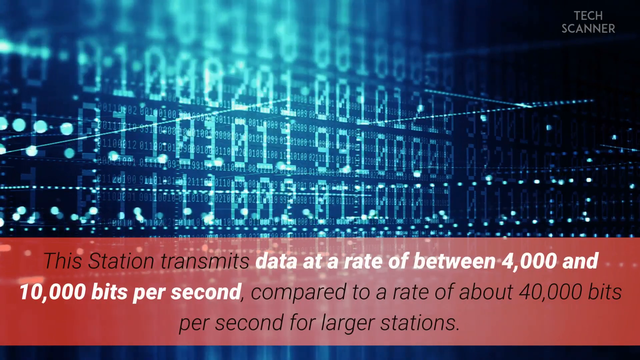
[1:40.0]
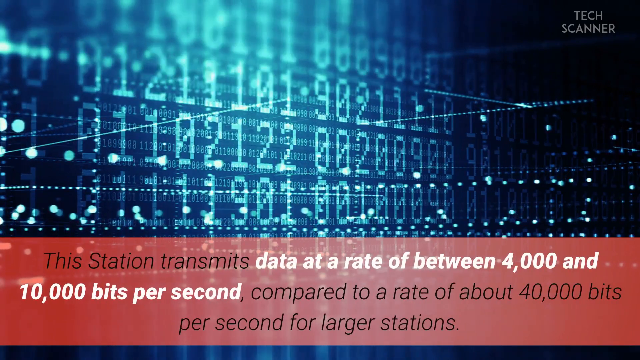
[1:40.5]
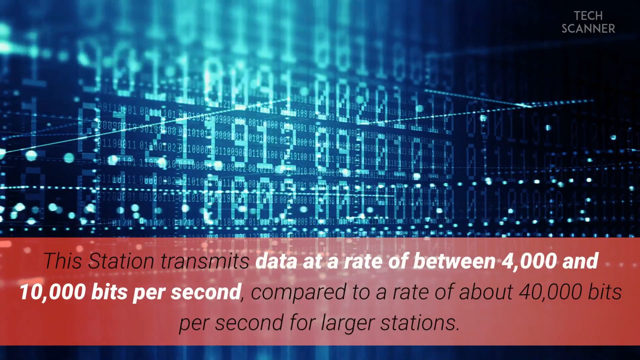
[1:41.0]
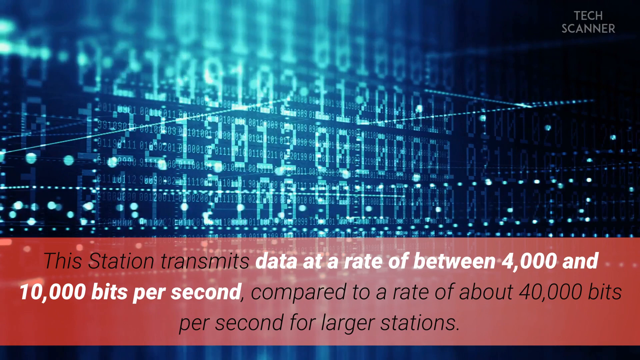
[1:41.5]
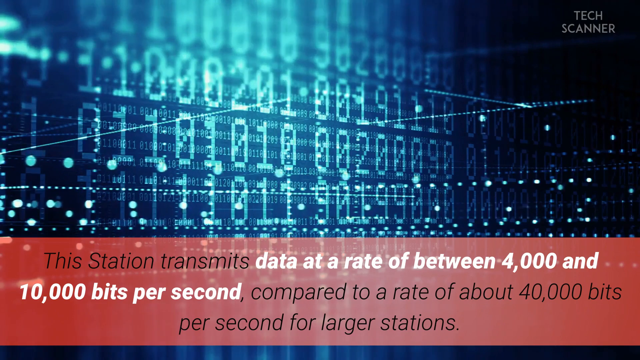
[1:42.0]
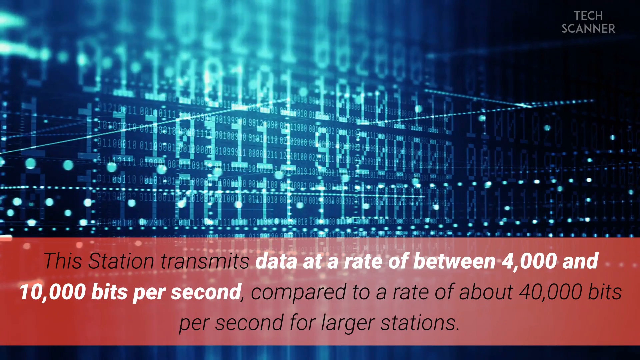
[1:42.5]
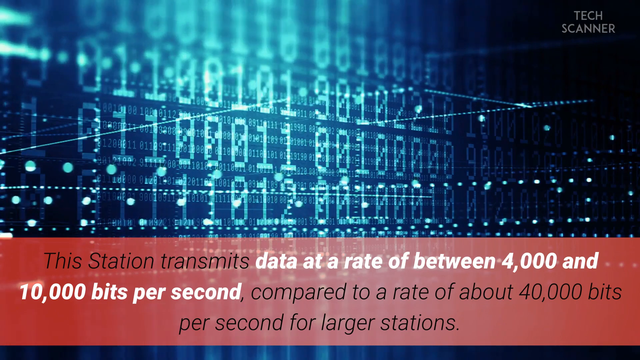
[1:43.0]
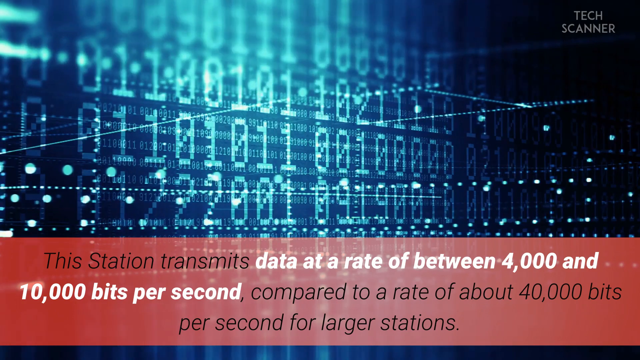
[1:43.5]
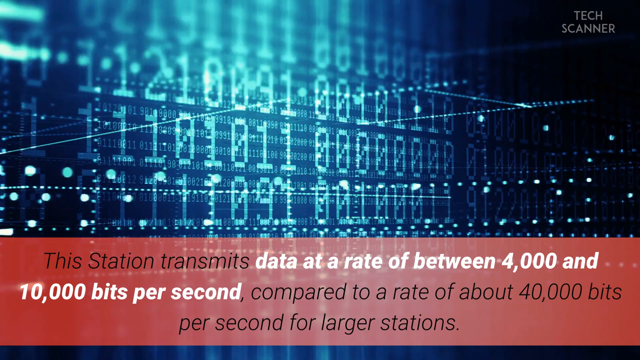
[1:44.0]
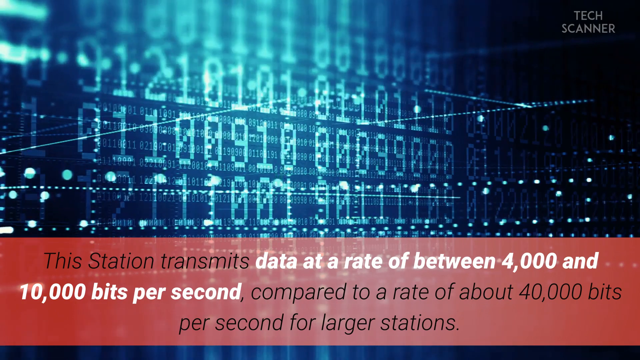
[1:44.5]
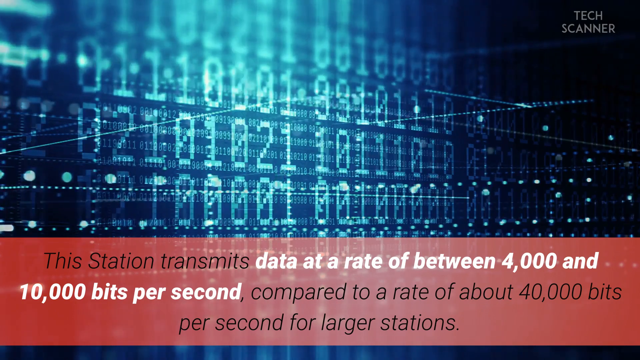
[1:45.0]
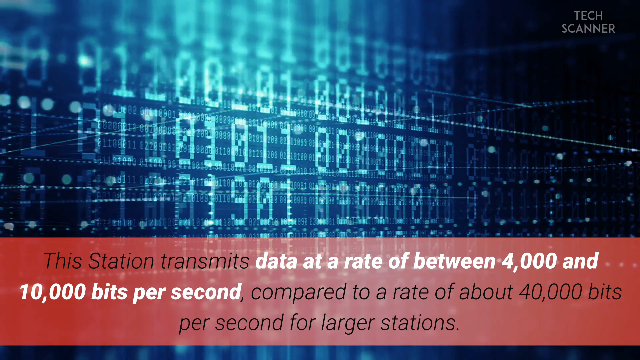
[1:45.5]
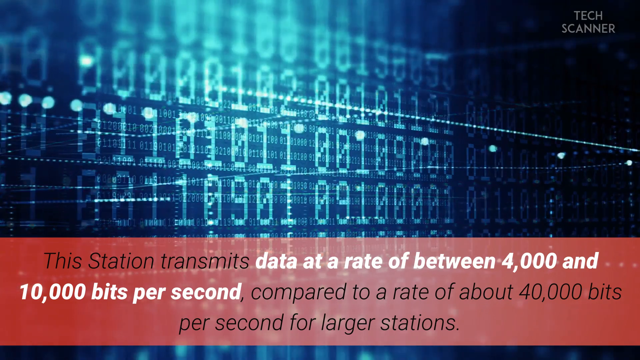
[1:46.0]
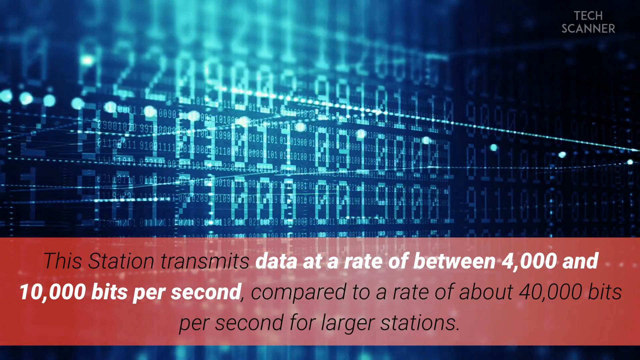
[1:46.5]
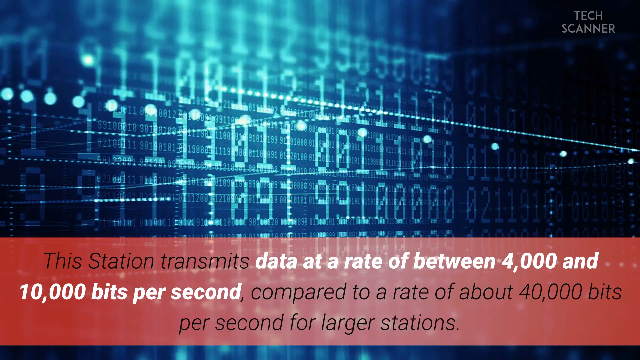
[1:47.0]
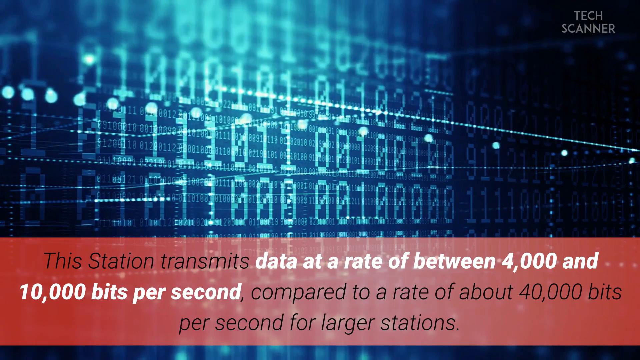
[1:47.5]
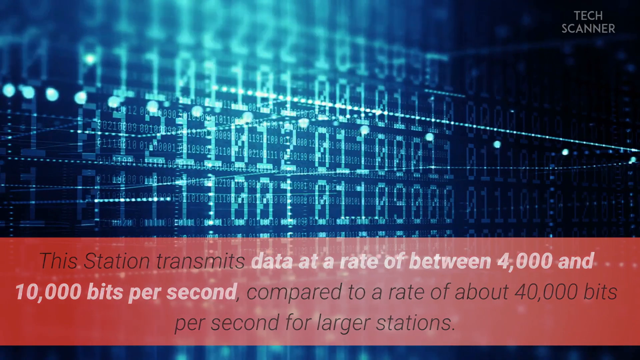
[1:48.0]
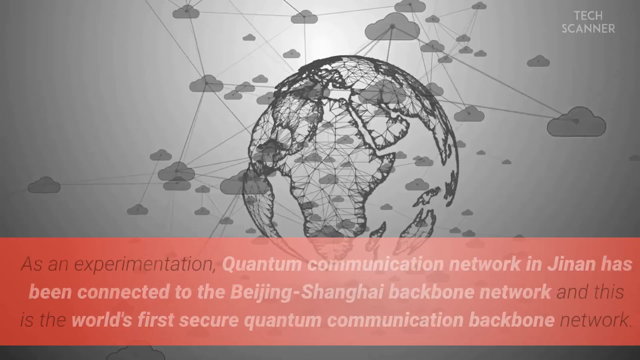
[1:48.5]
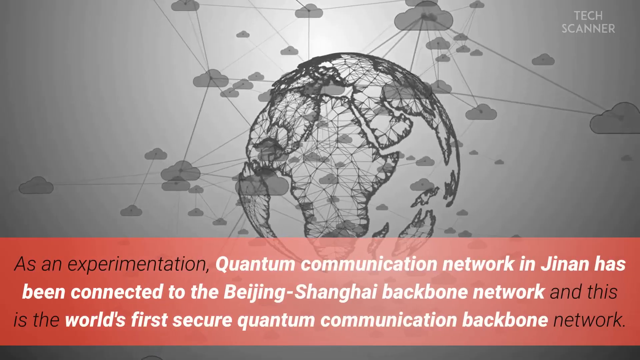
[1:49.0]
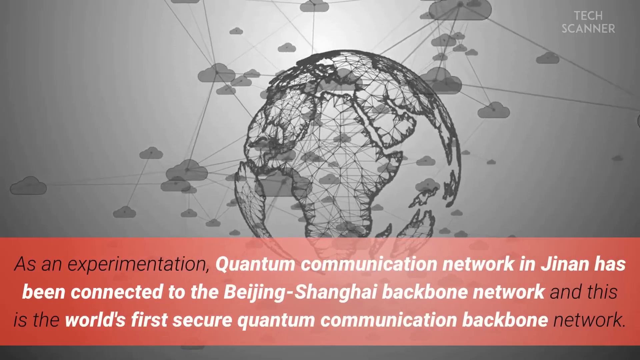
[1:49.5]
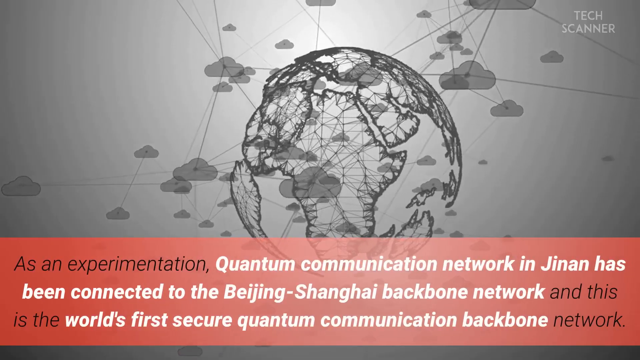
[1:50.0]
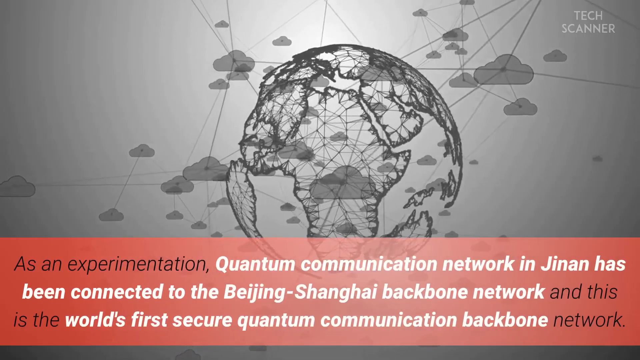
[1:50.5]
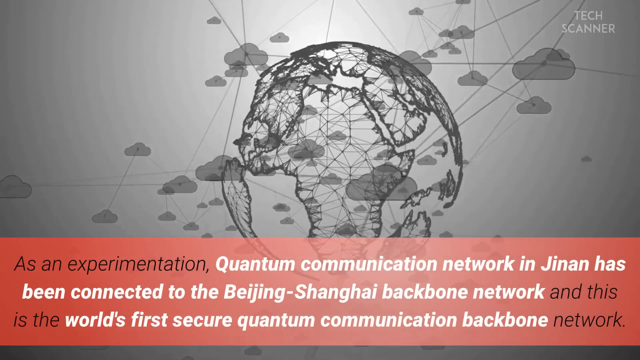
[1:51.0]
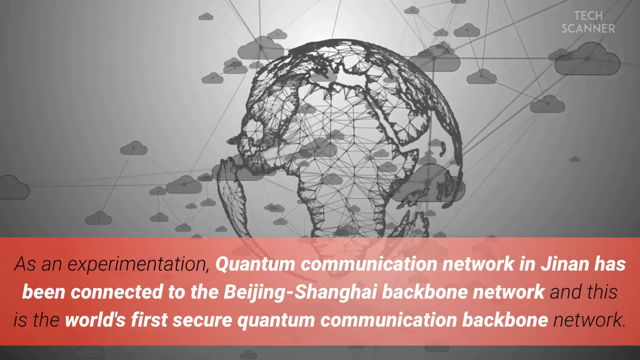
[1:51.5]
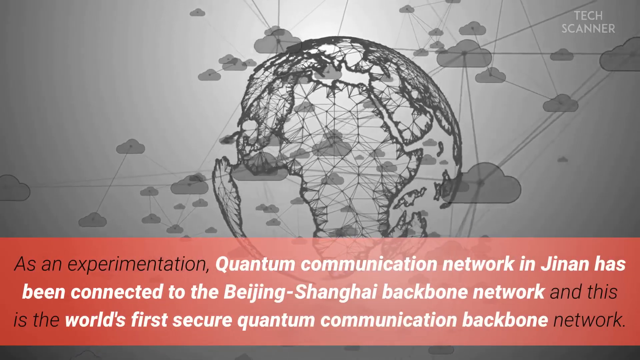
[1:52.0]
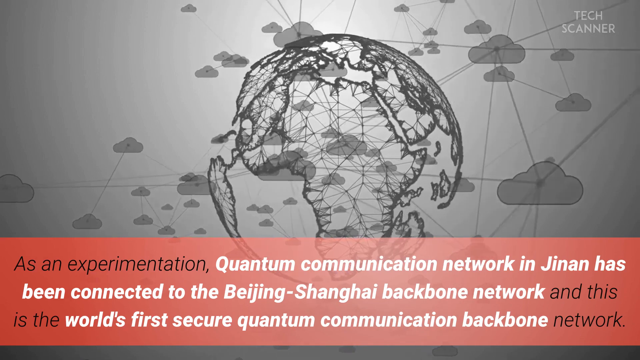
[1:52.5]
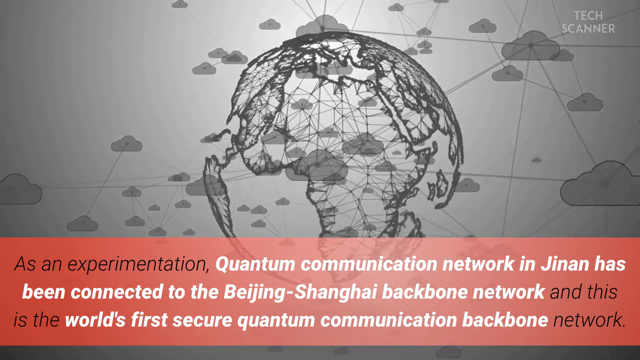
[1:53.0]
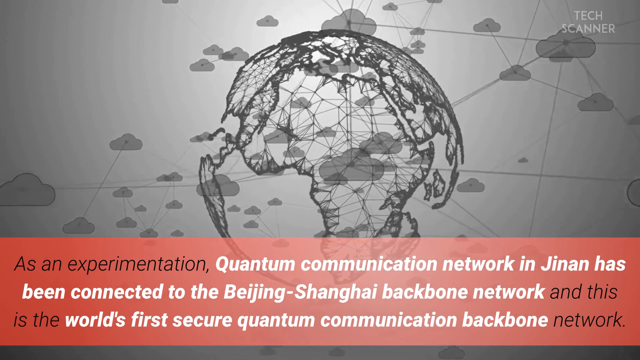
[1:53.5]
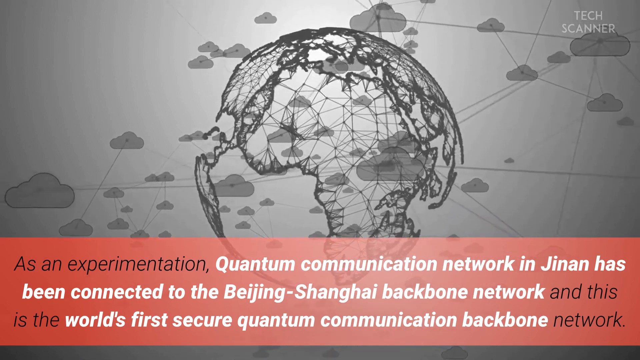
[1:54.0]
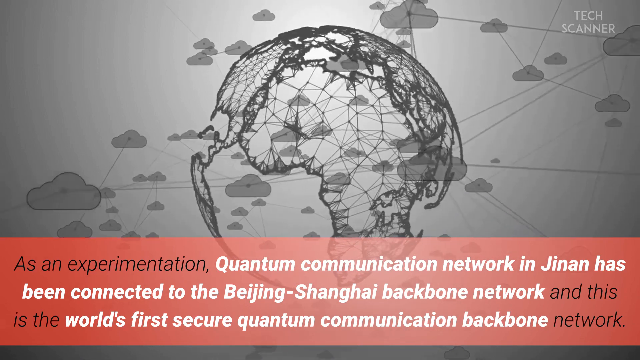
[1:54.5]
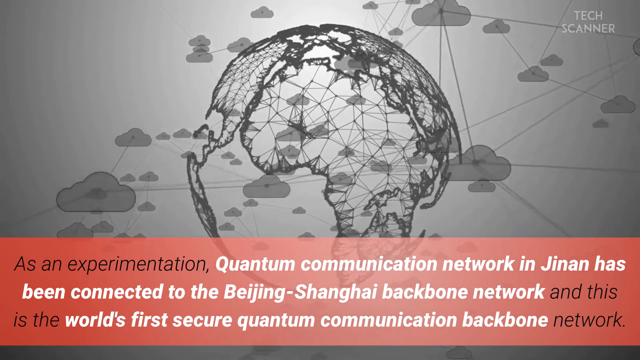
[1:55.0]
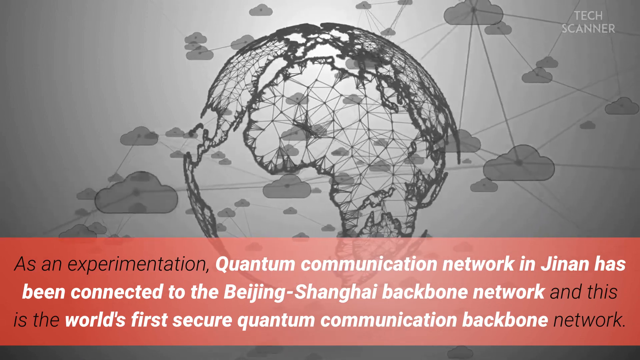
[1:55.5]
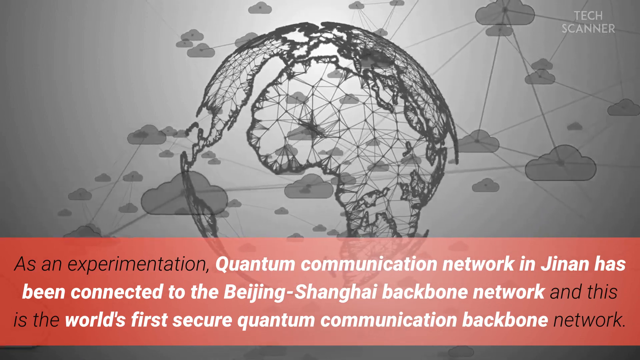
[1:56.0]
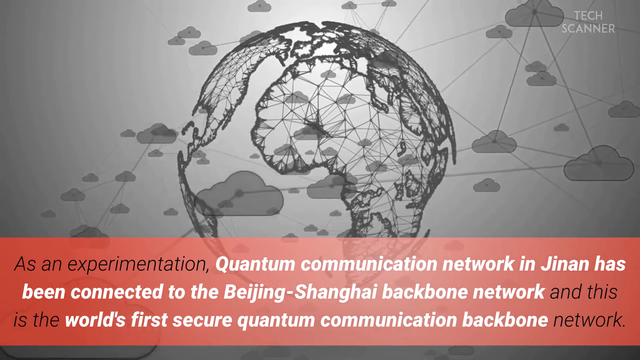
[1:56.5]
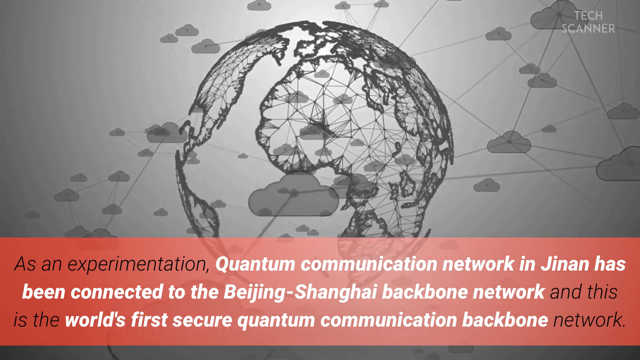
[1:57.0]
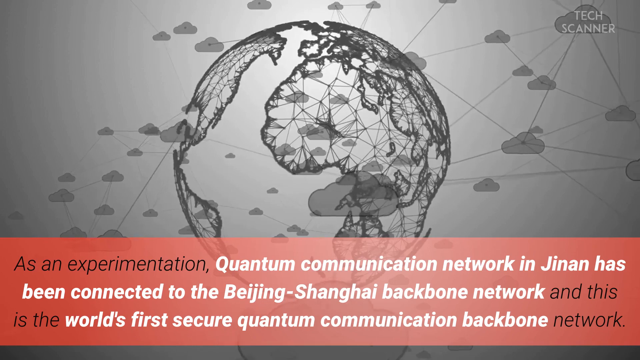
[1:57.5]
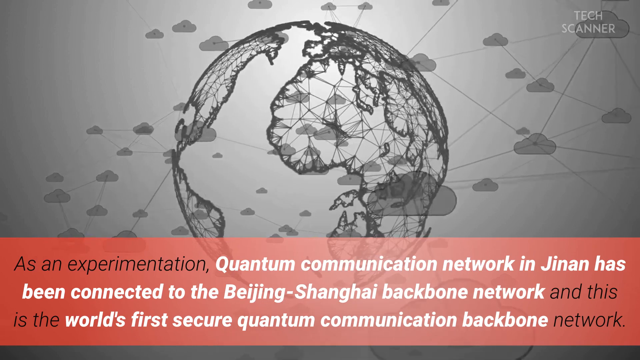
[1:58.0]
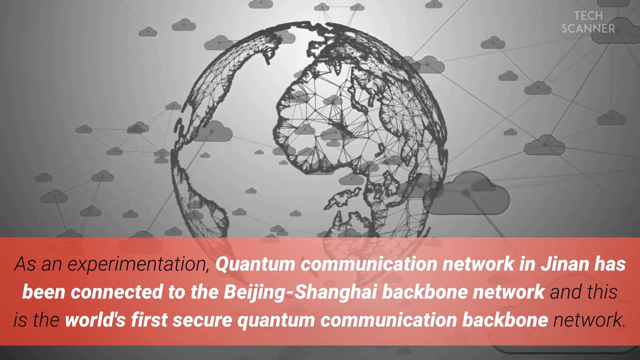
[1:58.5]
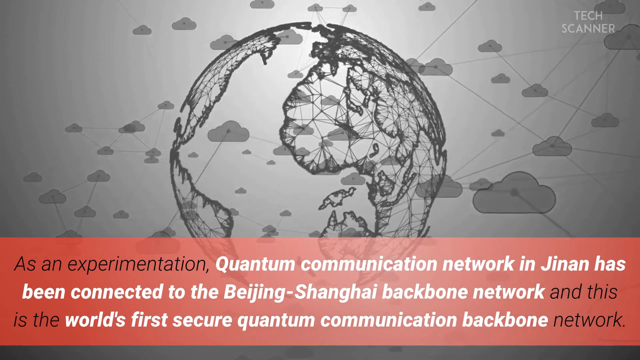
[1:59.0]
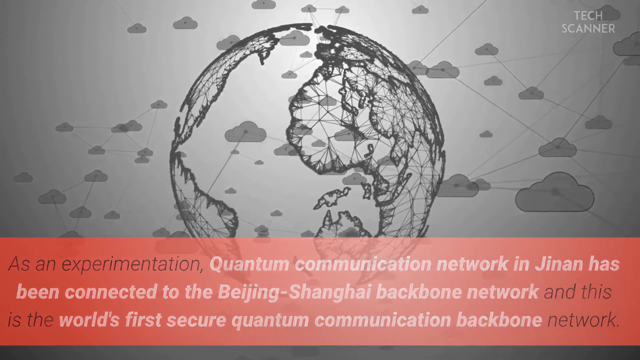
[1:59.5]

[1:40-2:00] The background keeps flashing different numbers, and the red bar at the bottom reads "this station transmits data at a rate of between 4,000 and 10,000 bits per second, compared to a rate of about 40,000 bits per second for larger stations," with "data at a rate between 4,000" written in white. The picture changes to a map done in black and white that looks like a hand sketch. The red box then carries text ending "has been connected to the Beijing Shanghai Backbone Network" and "this is the world's first secure quantum communicative backbone network." The illustrated globe keeps slowly turning. A flash of lights and colors follows as it shifts to a different image that looks like CGI computer animation, visible only for a brief second.